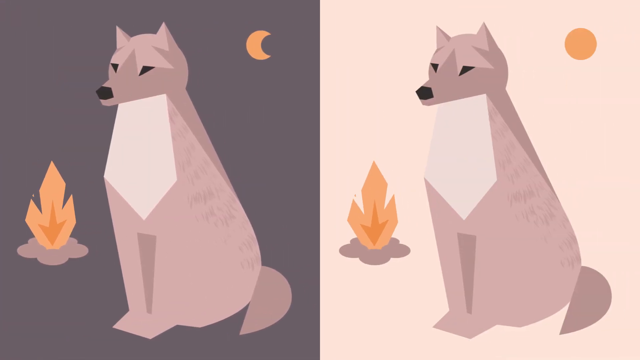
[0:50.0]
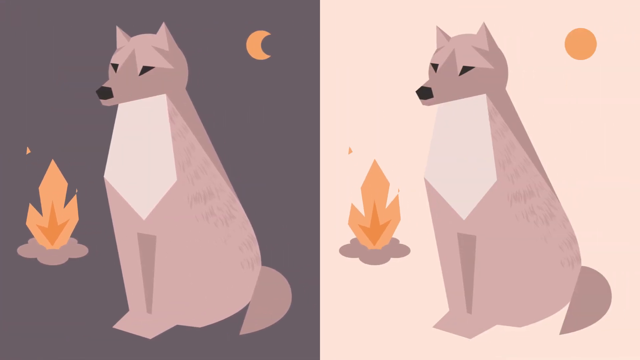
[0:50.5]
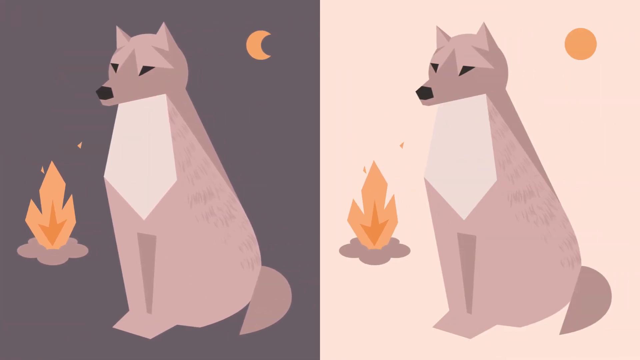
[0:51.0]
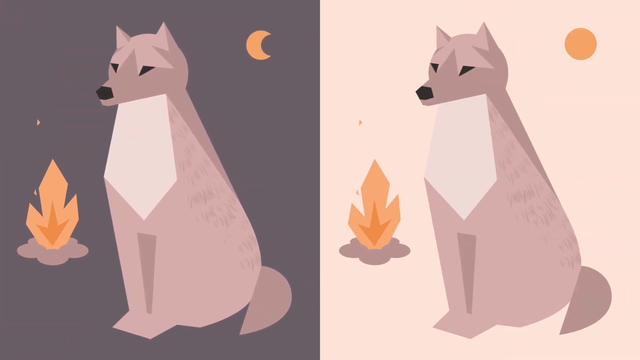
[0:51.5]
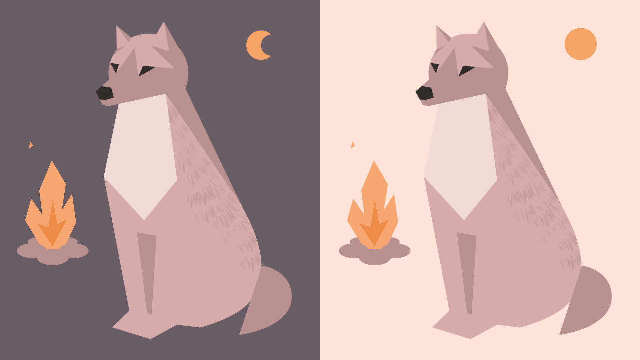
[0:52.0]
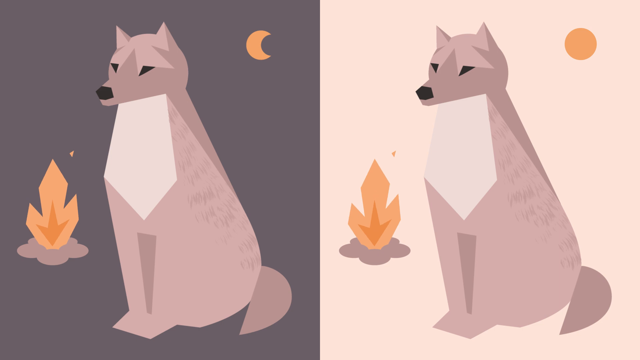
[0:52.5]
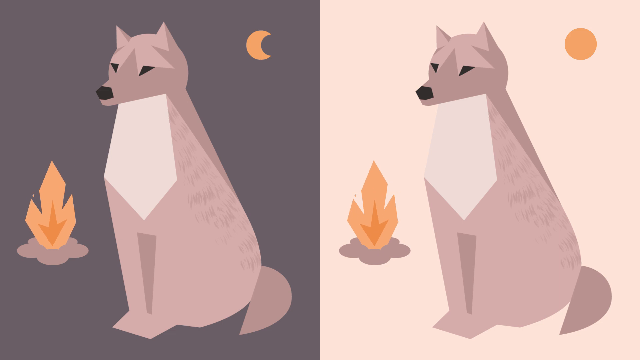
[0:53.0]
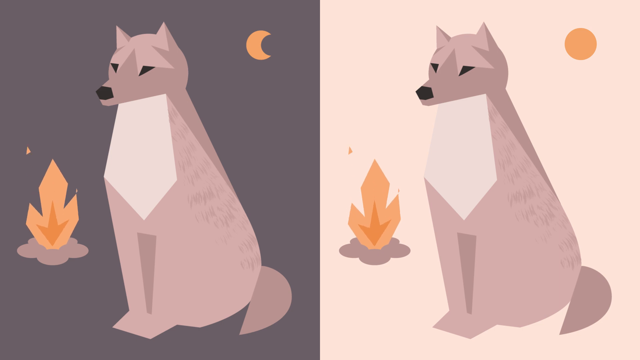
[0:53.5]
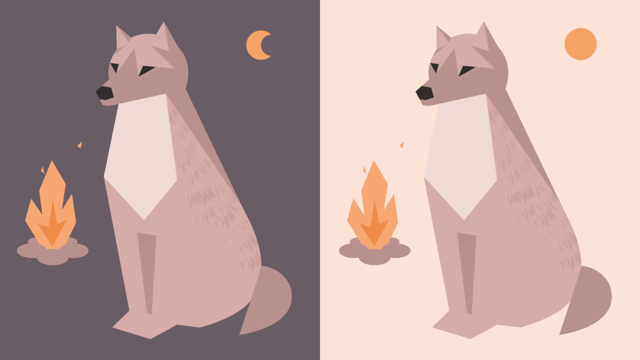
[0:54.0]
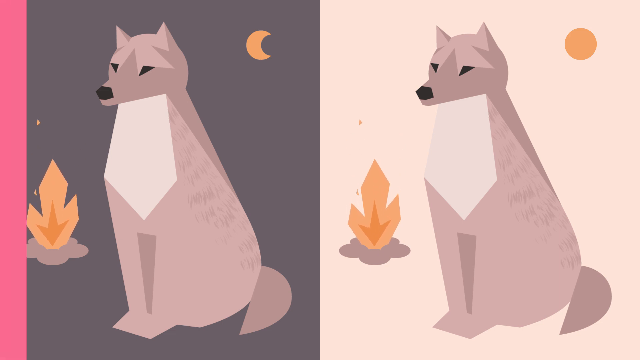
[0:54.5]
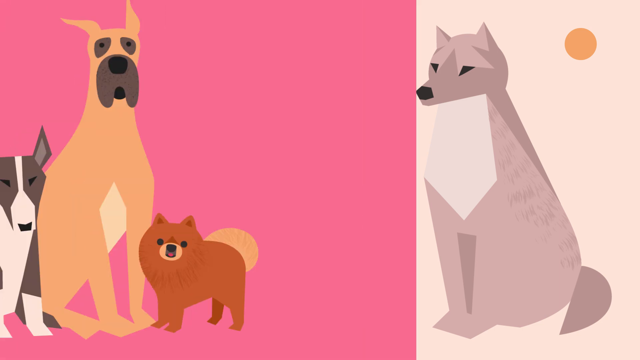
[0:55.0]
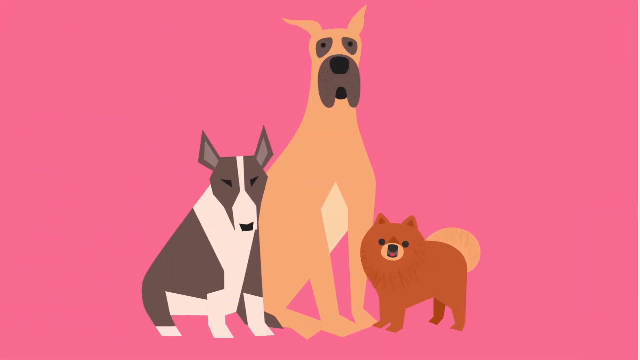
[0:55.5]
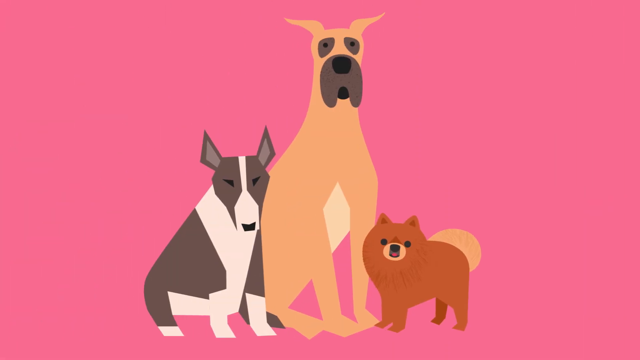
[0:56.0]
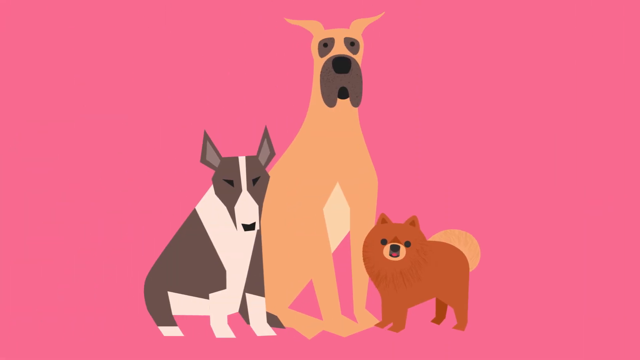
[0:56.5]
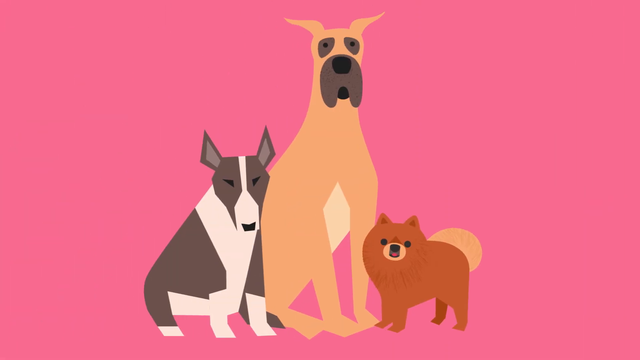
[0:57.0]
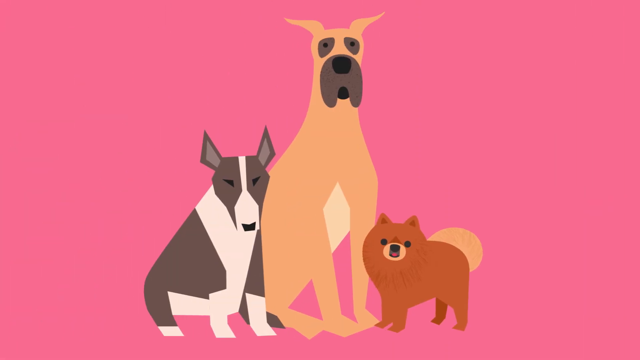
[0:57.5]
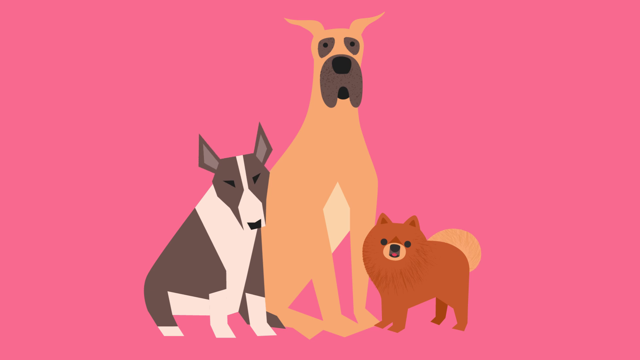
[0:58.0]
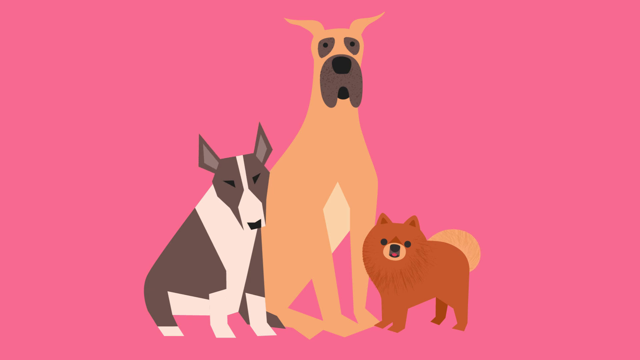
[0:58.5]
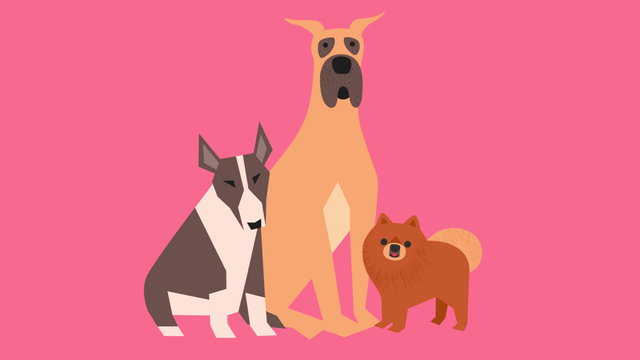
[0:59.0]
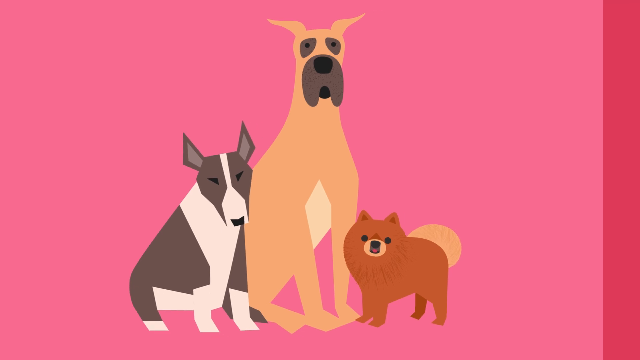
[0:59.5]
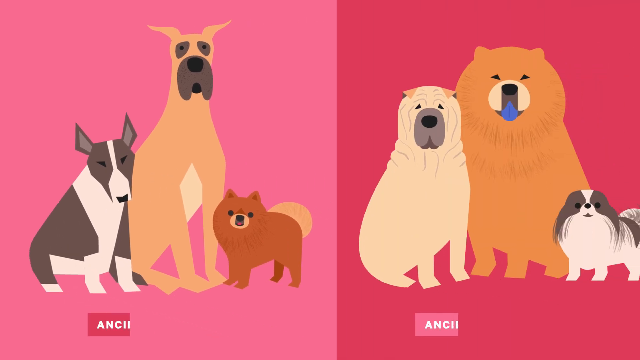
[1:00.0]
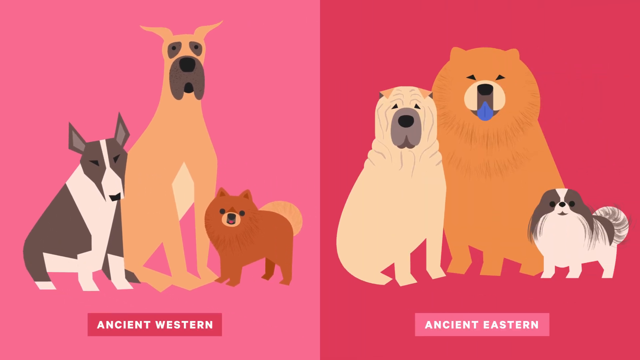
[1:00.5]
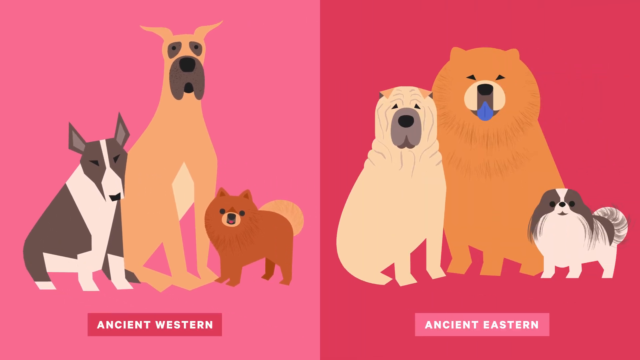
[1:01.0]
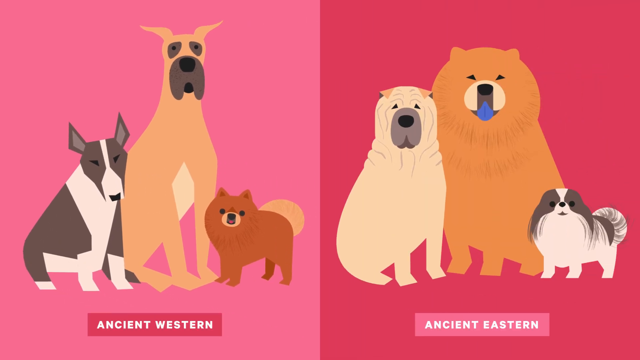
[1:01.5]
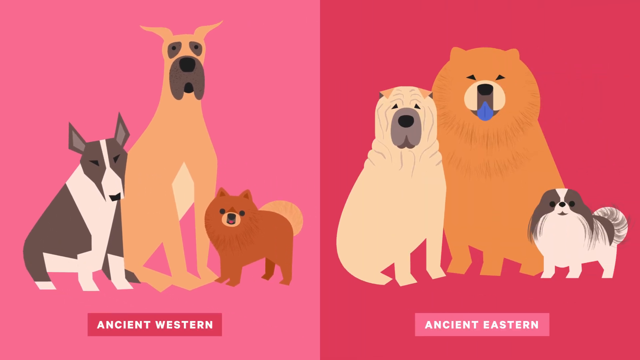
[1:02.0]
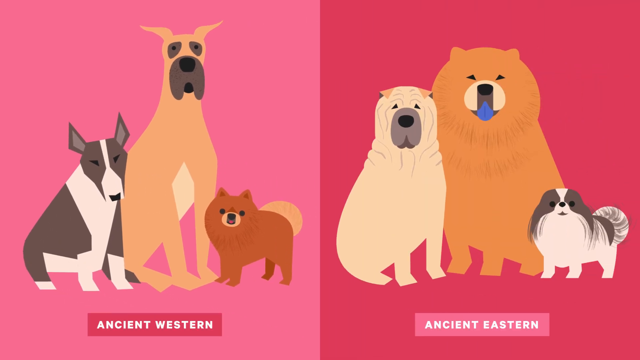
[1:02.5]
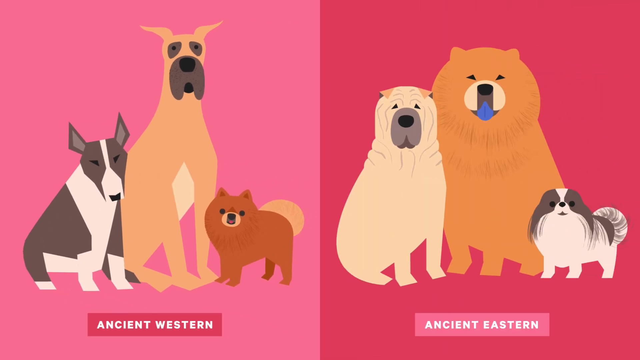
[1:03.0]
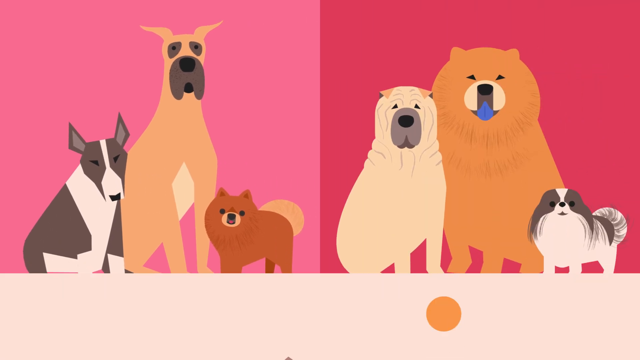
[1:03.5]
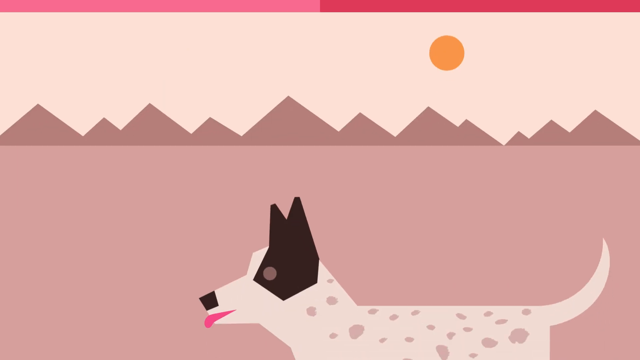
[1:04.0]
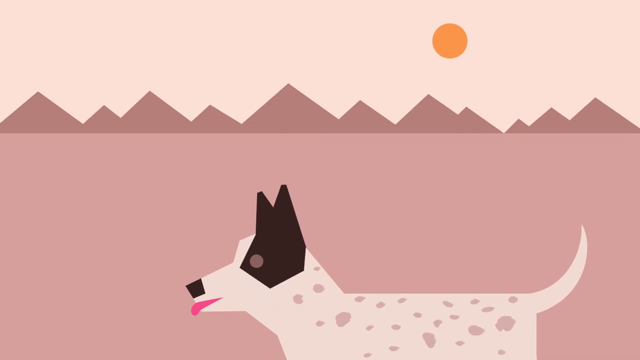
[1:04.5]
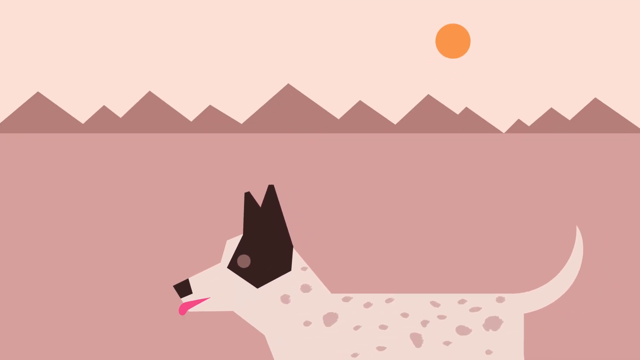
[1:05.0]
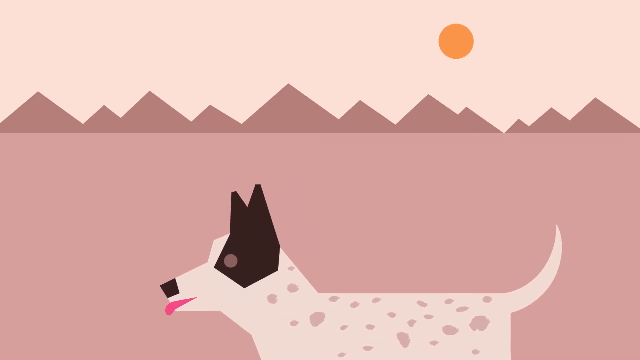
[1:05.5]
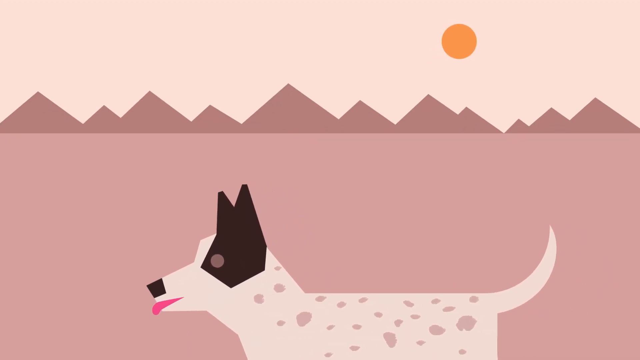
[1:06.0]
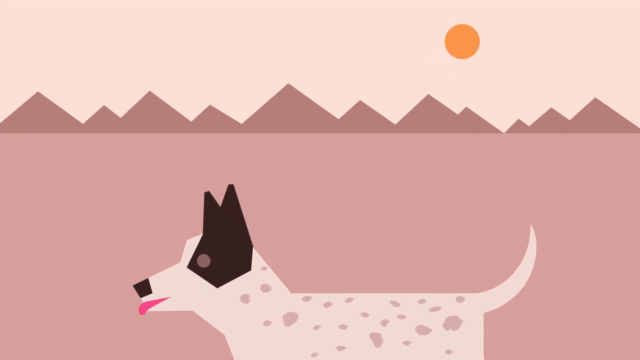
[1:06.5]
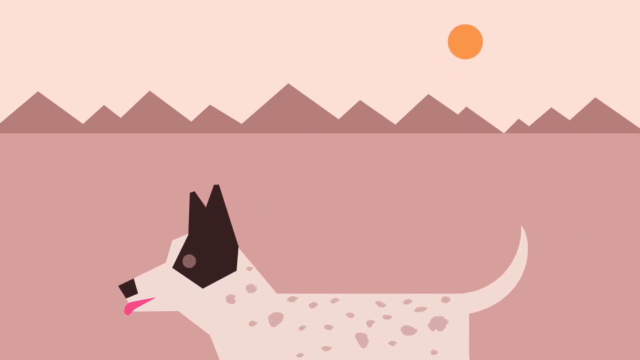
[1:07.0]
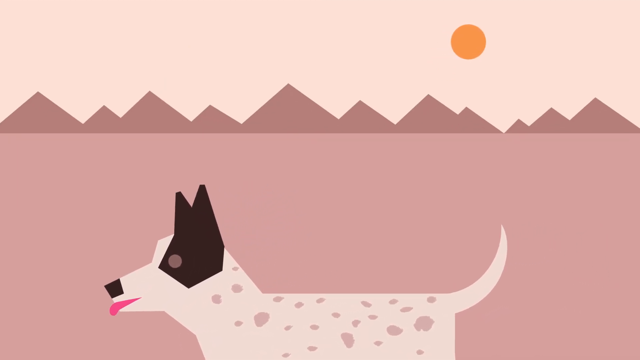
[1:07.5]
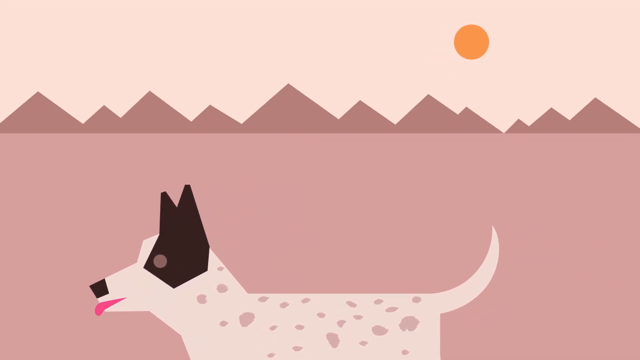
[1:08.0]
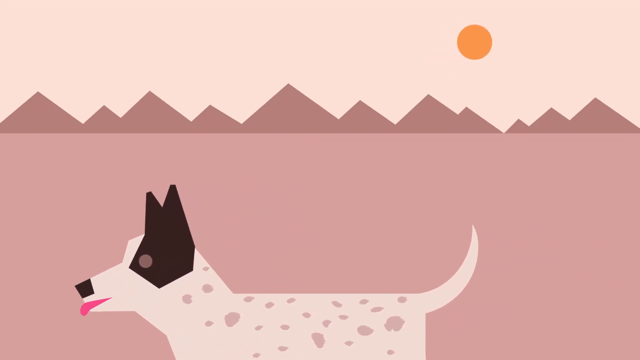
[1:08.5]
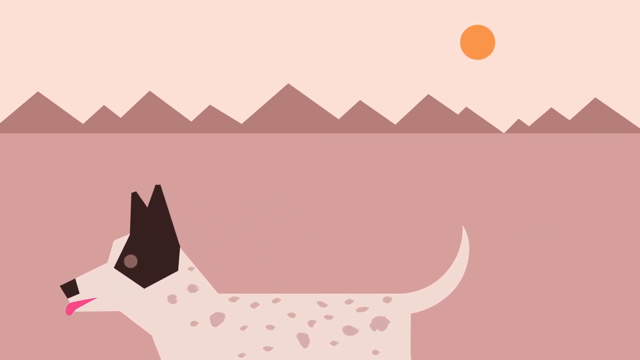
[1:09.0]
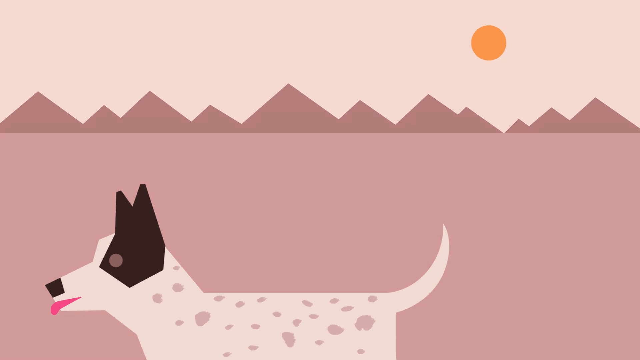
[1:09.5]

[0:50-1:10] Two separate wolves are shown. One sits next to a roaring fire at night, with a moon icon at the top right of its picture and a dark background. On the right side of the screen, a wolf sits next to a fire during the daytime, with a sun indicator at the top right of its picture and a brighter white background. The fire roars as the camera focuses on both wolves in the center of the screen. The scene changes to an illustration of three separate dogs in front of a pinkish-red background: a small dog on the right with puffy hair at its curly tail, a larger Great Dane-style dog in the center with droopy jowls, and a short-haired dog with a longer snout on the left. As they sit there, another scene opens on the right side of the screen, showing more fluffy dogs in front of a red background: a smaller dog with shaggy hair at the bottom right, a large fluffy dog with rounded ears in the center, and a very short-haired wrinkly dog on the left next to the fluffy dog. They are animated sitting in place. The scene then changes to an outdoor environment with mountains in the background and the sun in the top right of the sky. A short-haired dog with white fur, a slightly curled tail and pointed ears walks from right to left across the screen.